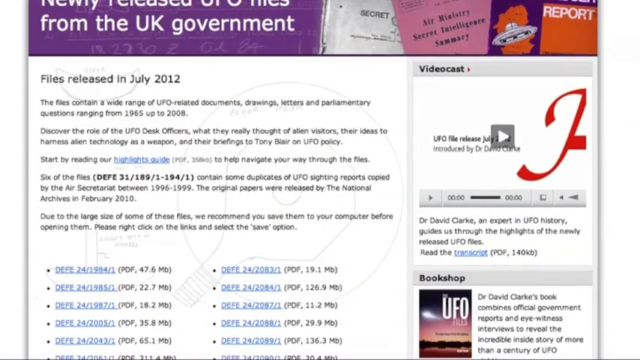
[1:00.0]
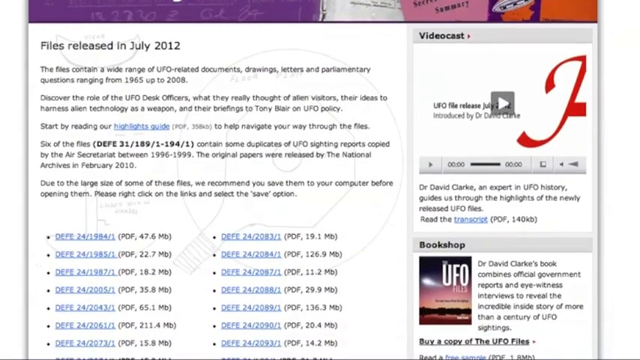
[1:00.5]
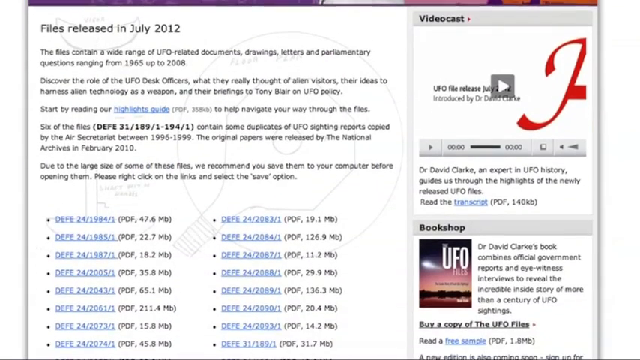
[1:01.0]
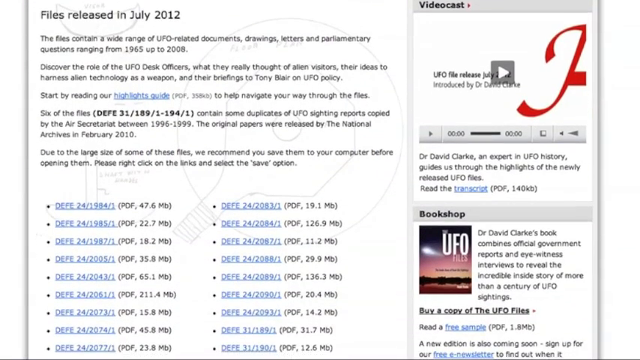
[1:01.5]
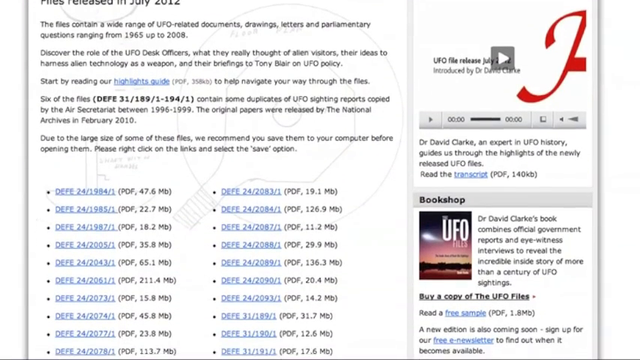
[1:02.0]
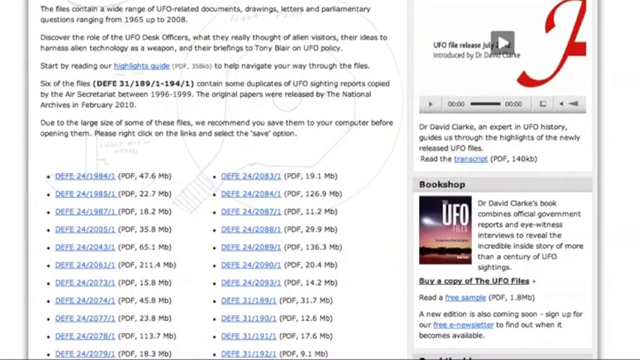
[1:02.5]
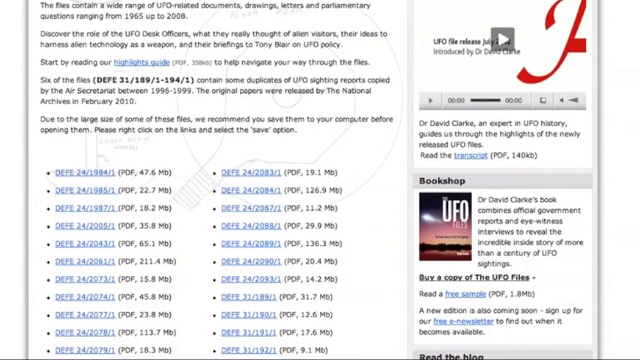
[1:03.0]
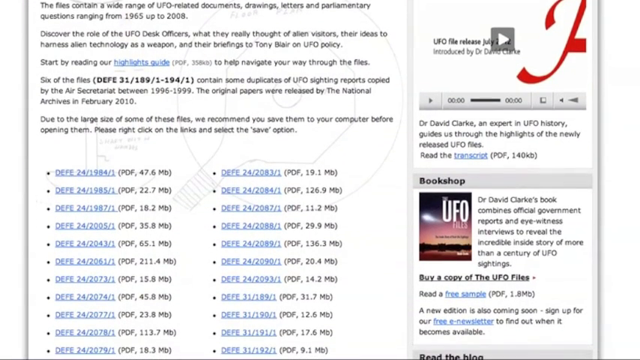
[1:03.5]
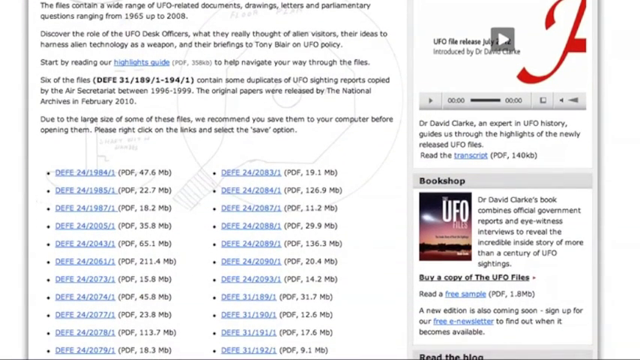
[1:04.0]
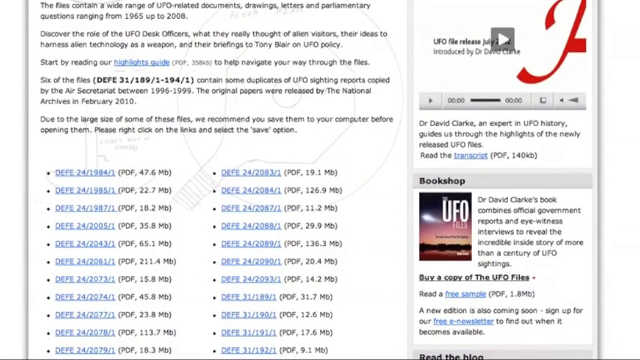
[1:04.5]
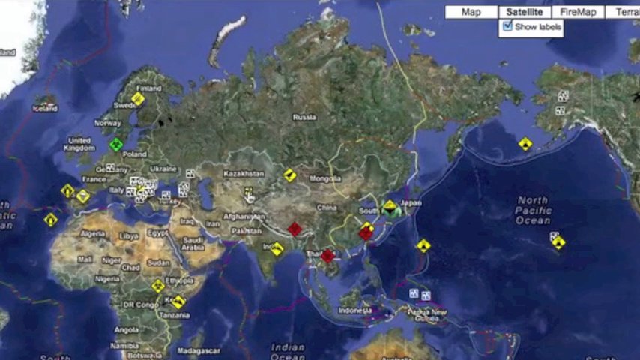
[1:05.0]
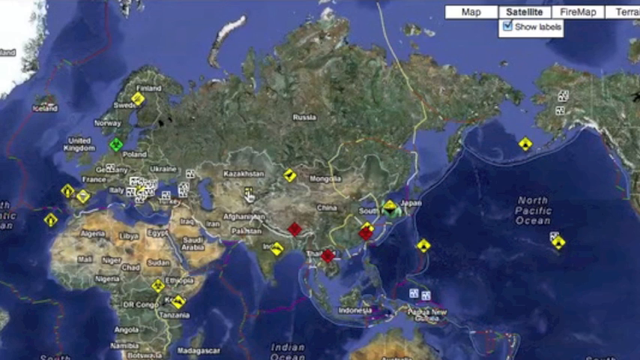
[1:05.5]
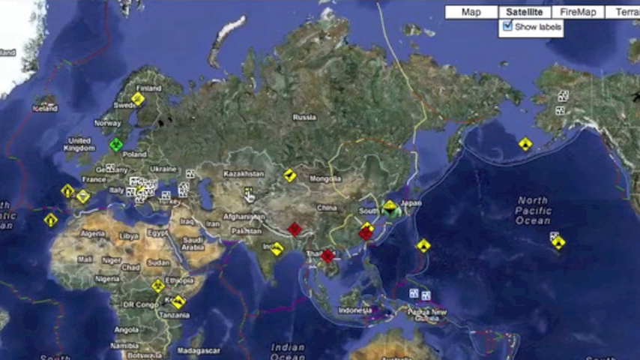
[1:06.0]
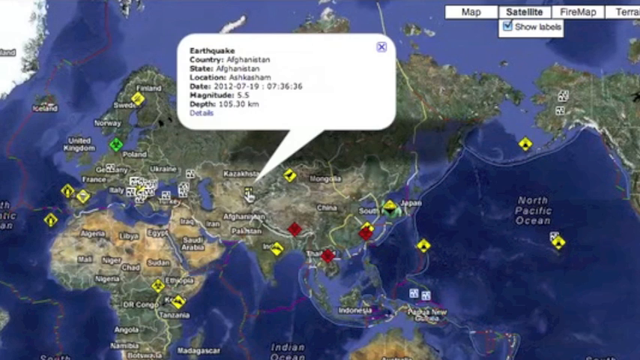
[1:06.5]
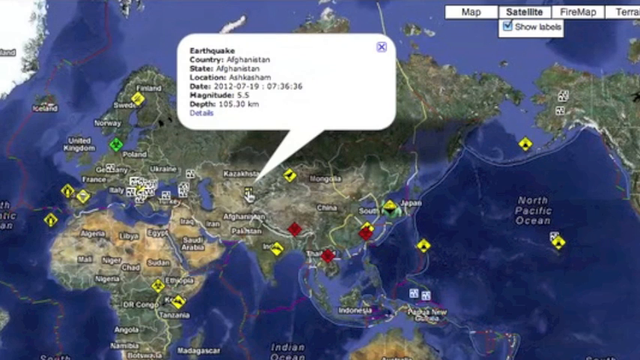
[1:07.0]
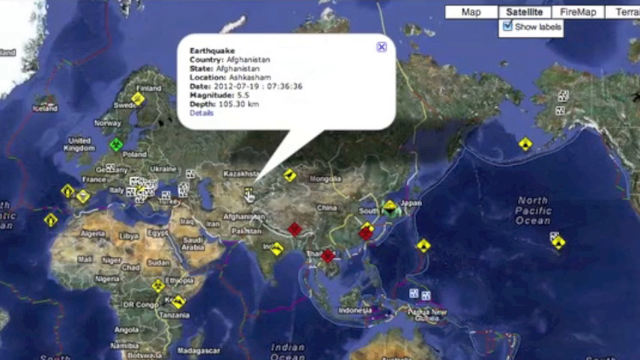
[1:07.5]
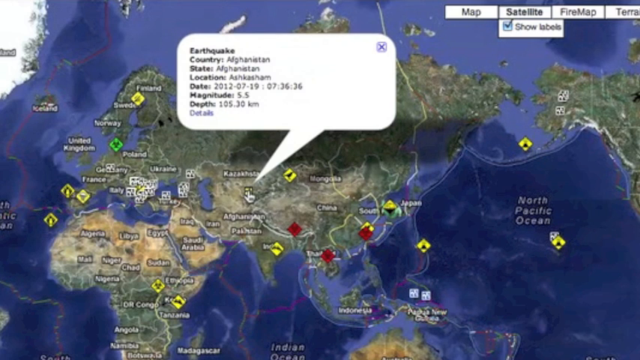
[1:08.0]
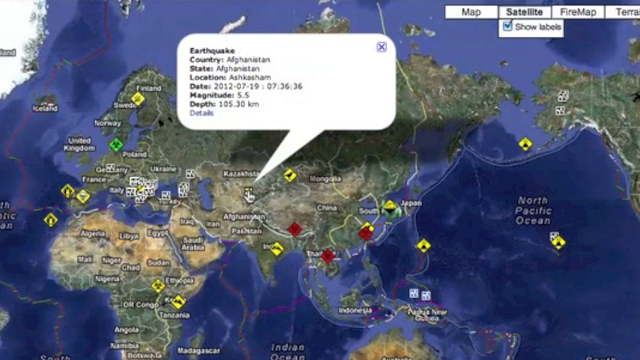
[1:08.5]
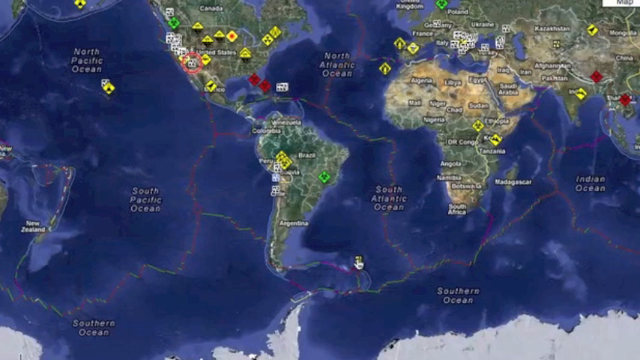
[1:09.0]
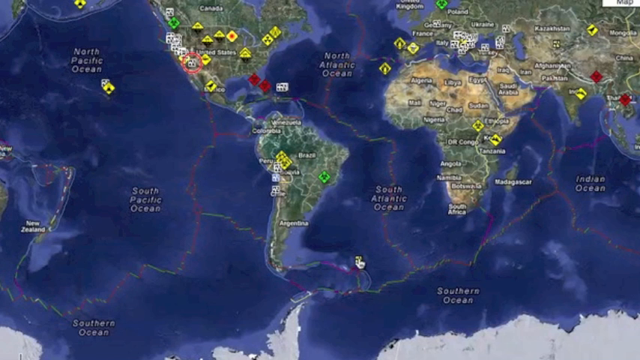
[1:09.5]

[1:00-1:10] A page showing an article reads "files released in July 2012." There is black writing too small to read and what looks like a blue hyperlink. Below the writing are five separate, spaced chunks of writing, followed by a number of blue hyperlinks. The person is scrolling down, so the page moves slowly. The screen then jumps to a map with markings in three colors: yellow, green and red. A text box appears reading what seems to be "earthquake" and "country Afghanistan," giving information about an earthquake. The screen then changes to another section of the map.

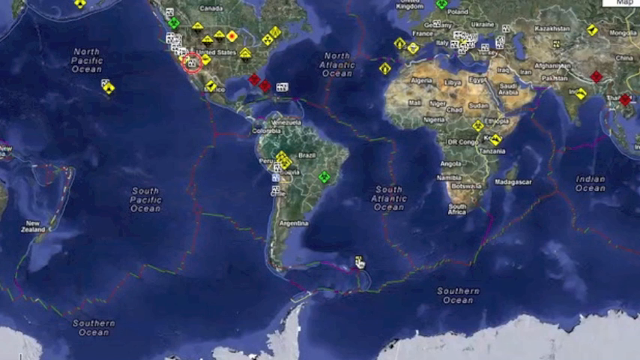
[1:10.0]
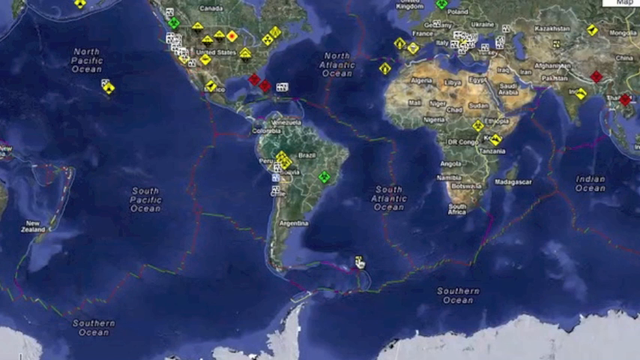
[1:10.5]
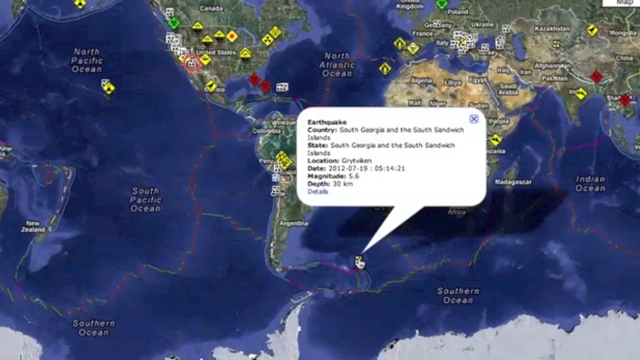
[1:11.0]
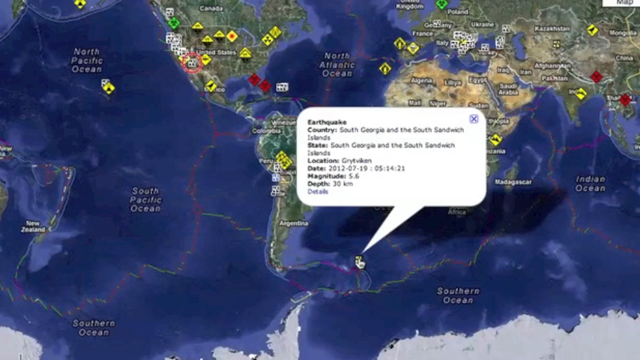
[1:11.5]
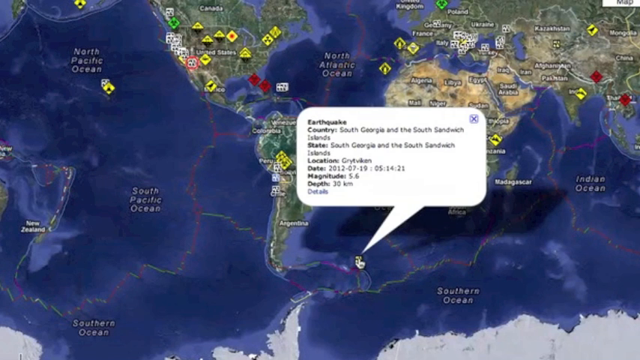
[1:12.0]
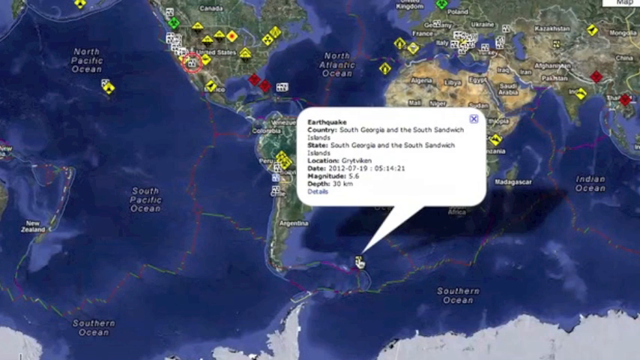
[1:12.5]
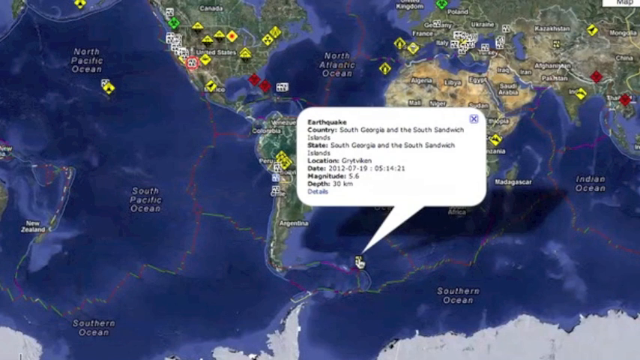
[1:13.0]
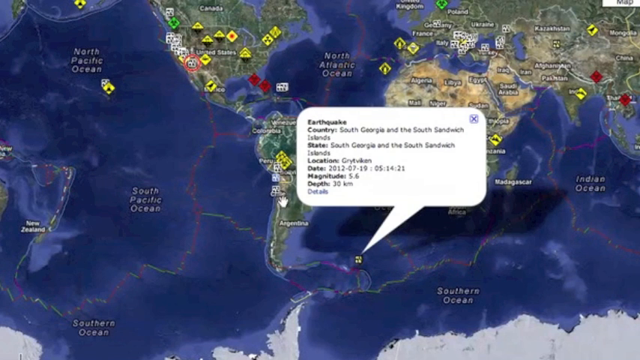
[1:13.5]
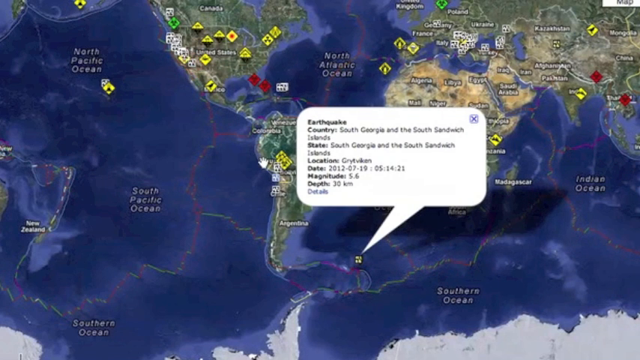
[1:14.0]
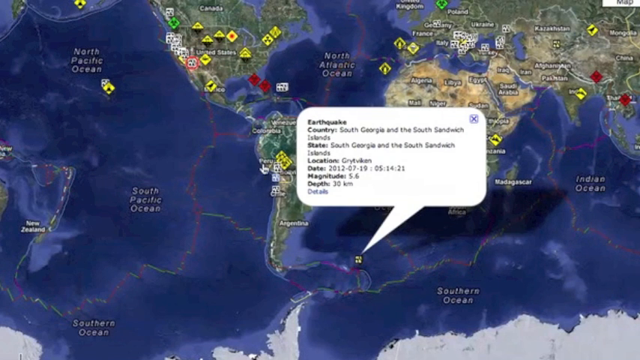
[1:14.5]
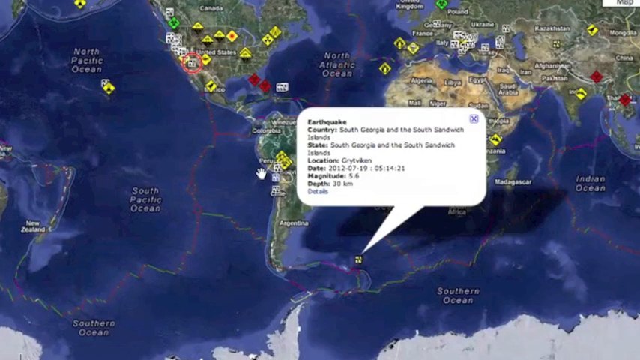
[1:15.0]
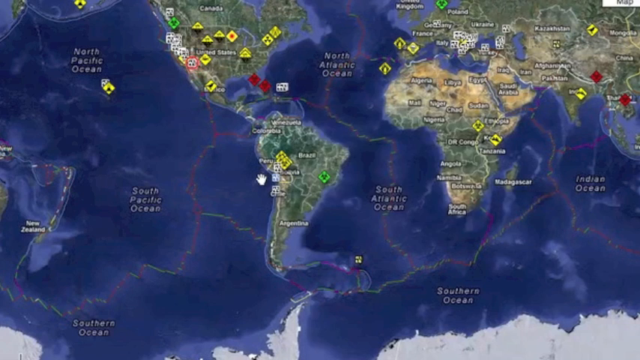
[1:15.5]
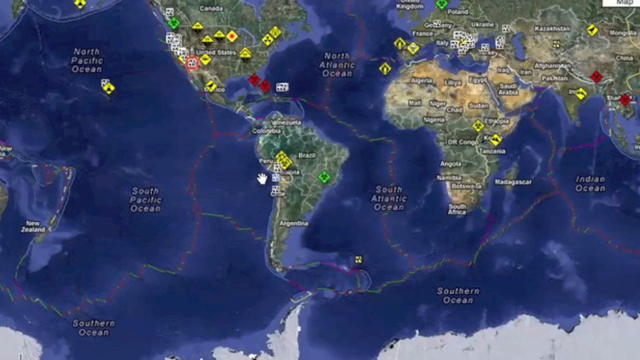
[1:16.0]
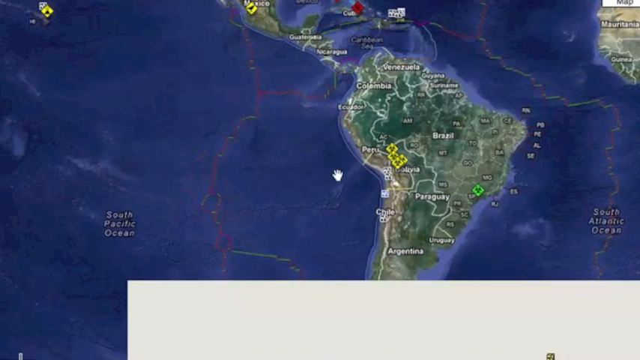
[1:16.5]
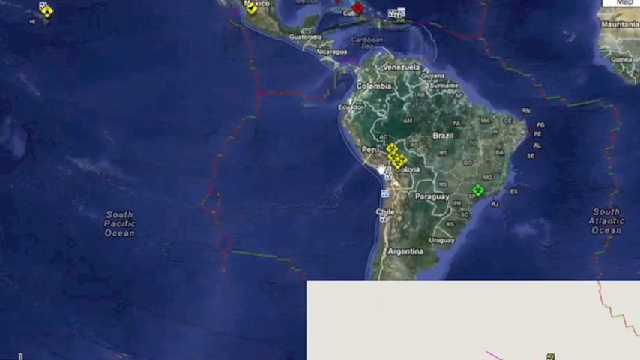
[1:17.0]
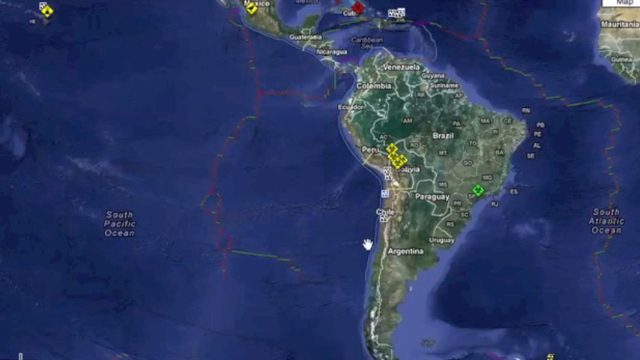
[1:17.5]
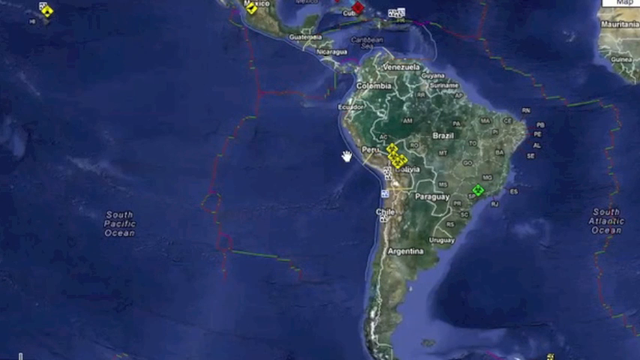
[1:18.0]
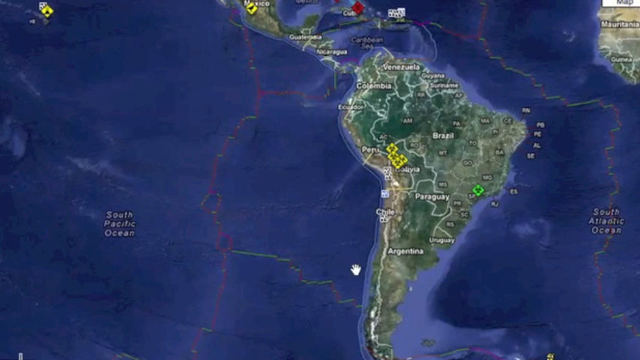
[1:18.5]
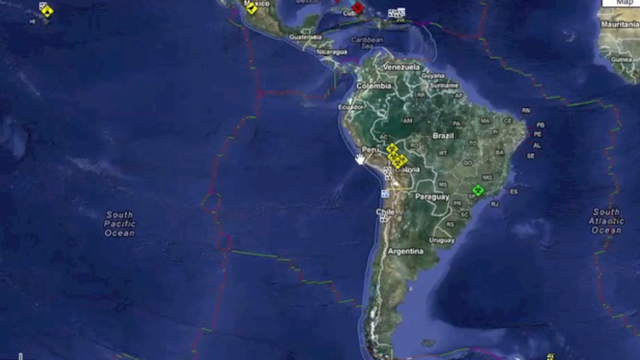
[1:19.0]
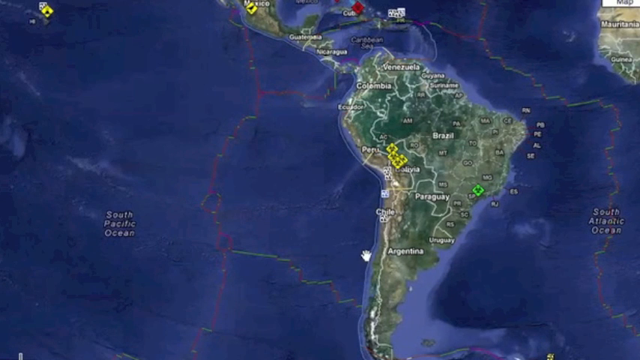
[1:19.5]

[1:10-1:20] The map shows yellow, red and green markers shaped like diamonds, almost like a yield sign. A white text box pops up toward the bottom part of the map reading "earthquake," then "country," and a few more pieces of information, possibly magnitude; it is small and blurry and hard to see exactly. A little finger cursor moves a bit. The screen changes, and the cursor moves again, going up and down the coast of South America.